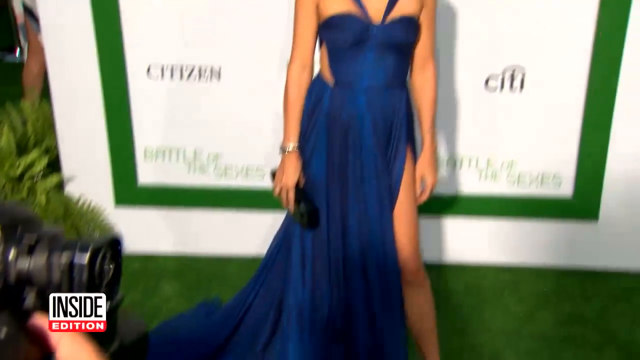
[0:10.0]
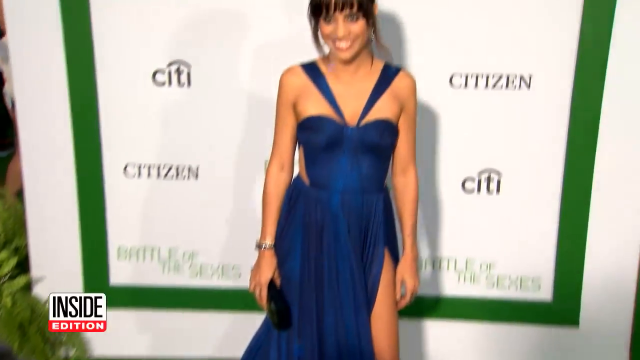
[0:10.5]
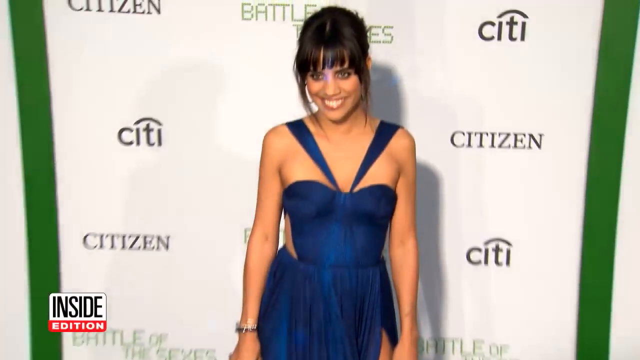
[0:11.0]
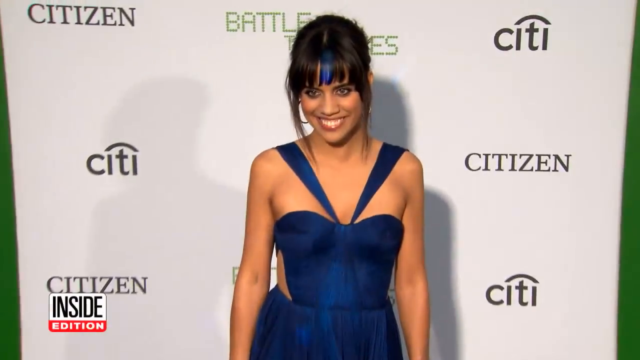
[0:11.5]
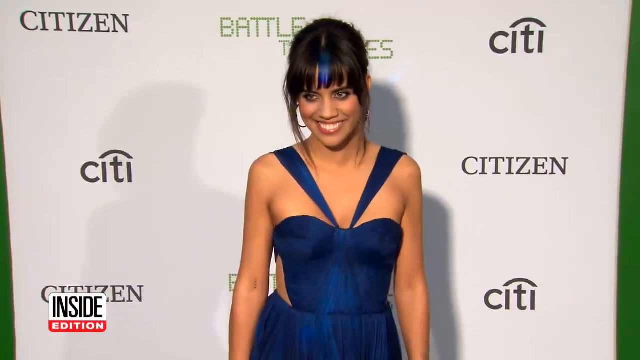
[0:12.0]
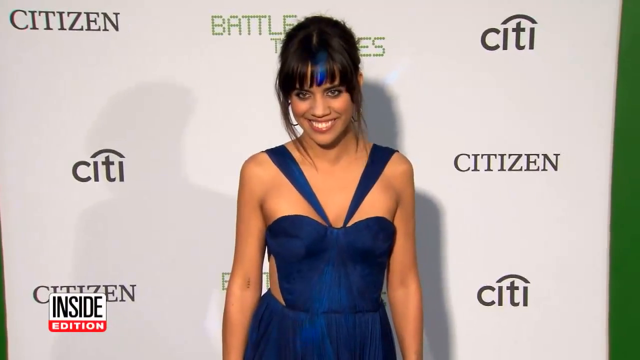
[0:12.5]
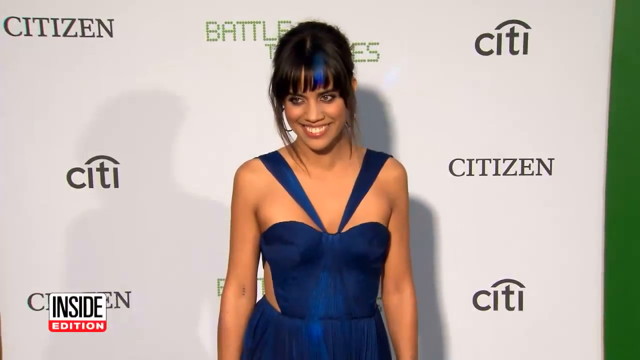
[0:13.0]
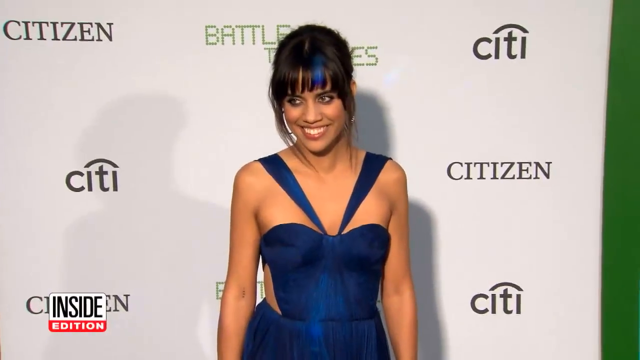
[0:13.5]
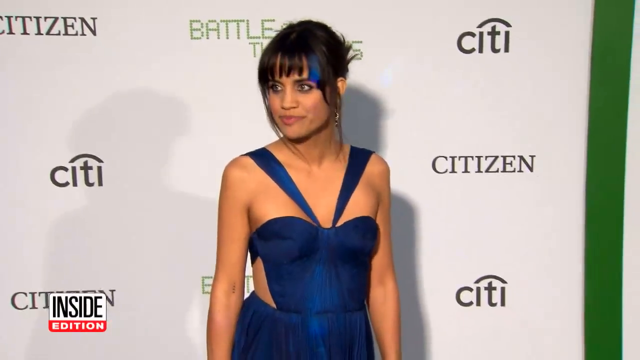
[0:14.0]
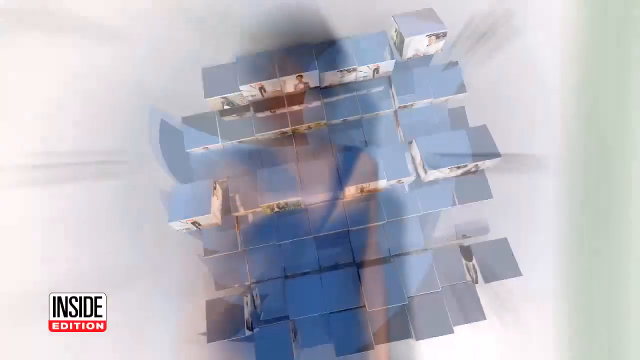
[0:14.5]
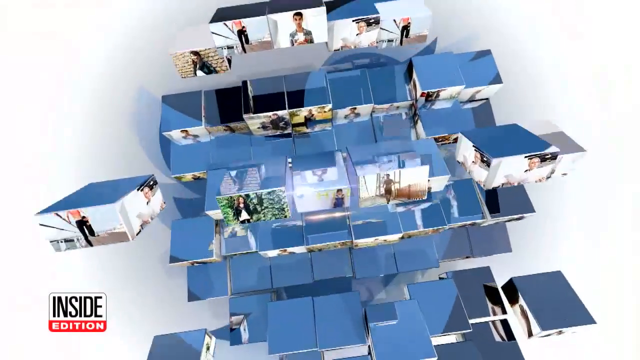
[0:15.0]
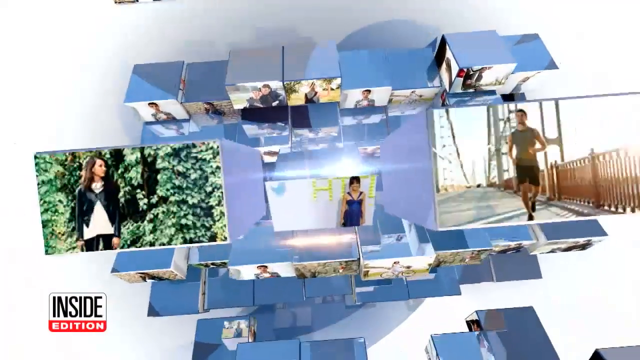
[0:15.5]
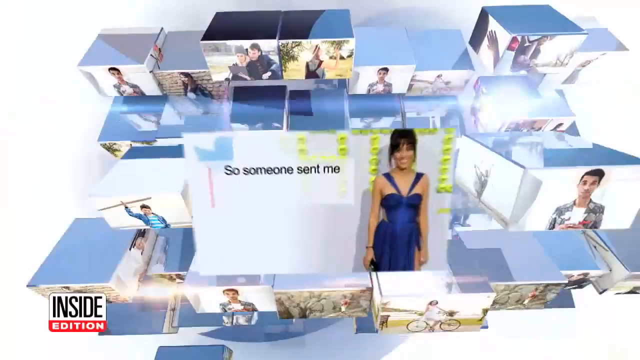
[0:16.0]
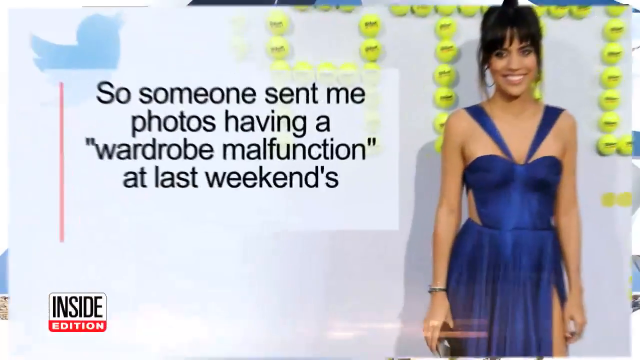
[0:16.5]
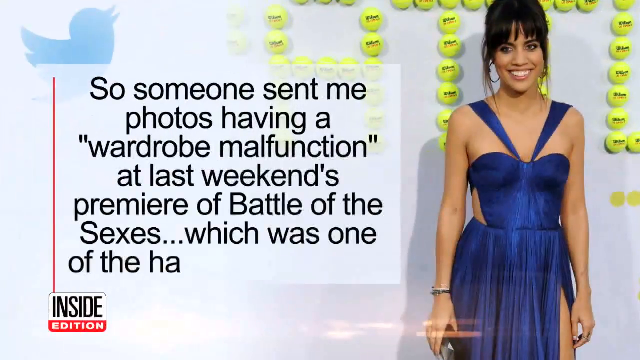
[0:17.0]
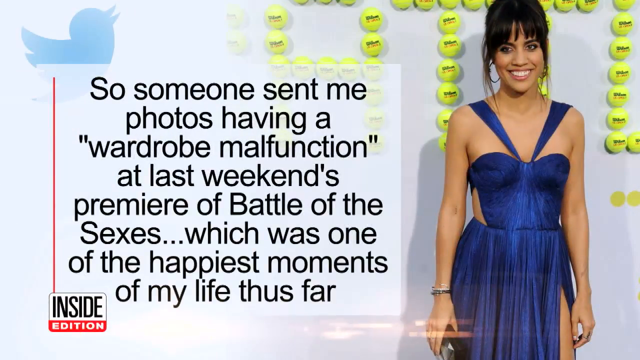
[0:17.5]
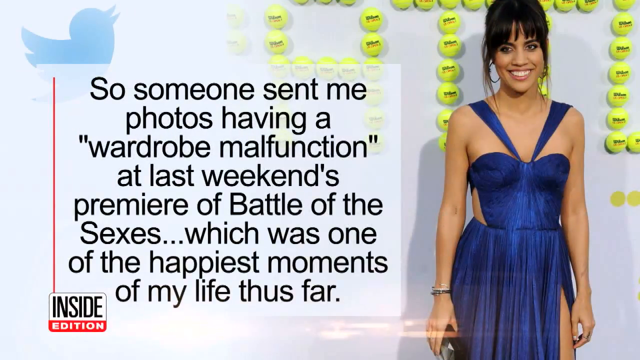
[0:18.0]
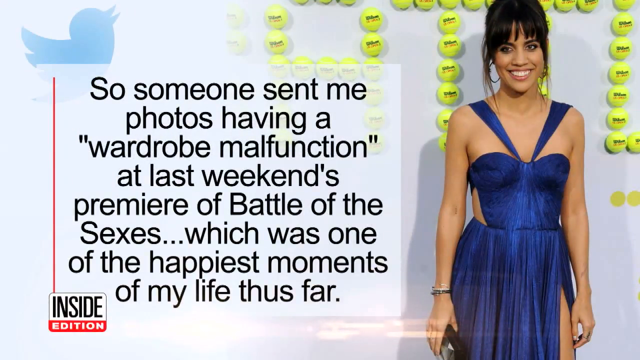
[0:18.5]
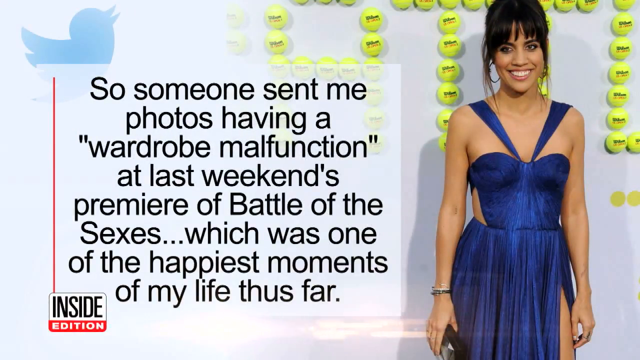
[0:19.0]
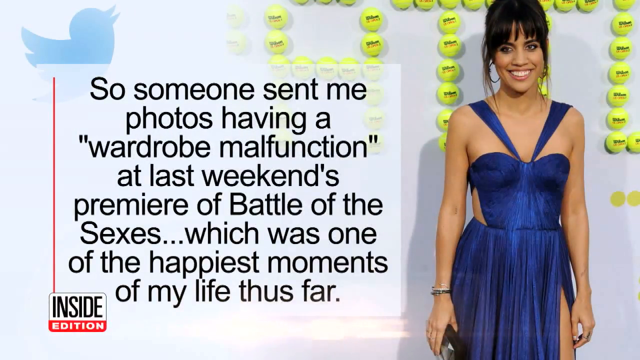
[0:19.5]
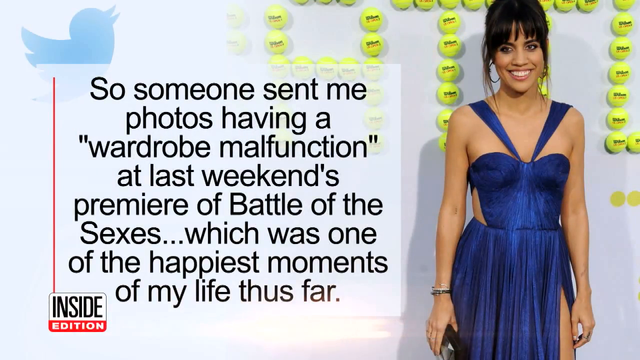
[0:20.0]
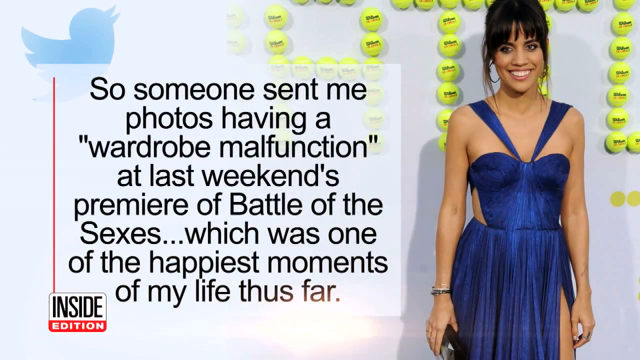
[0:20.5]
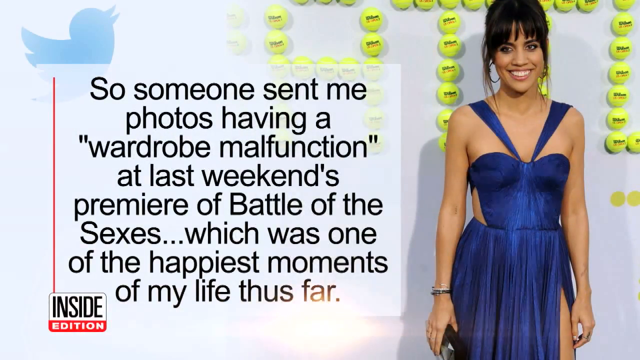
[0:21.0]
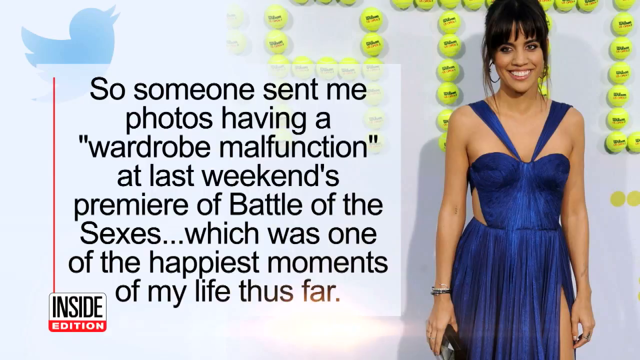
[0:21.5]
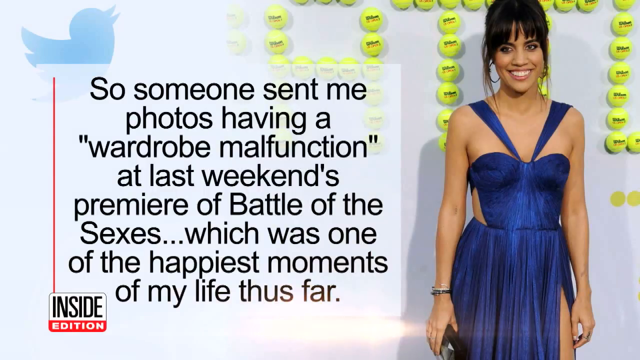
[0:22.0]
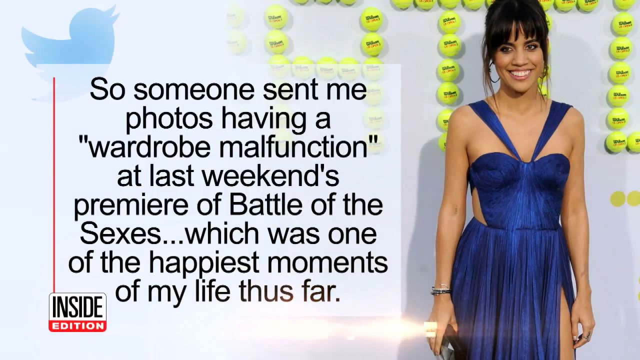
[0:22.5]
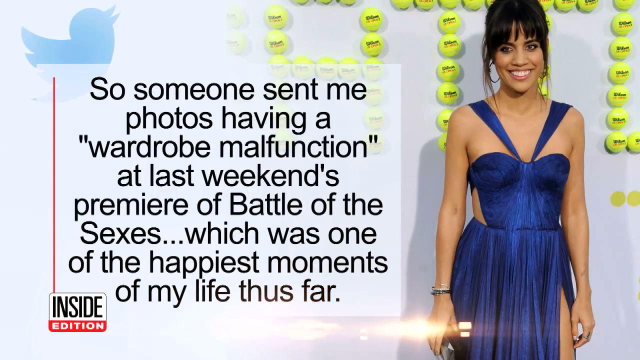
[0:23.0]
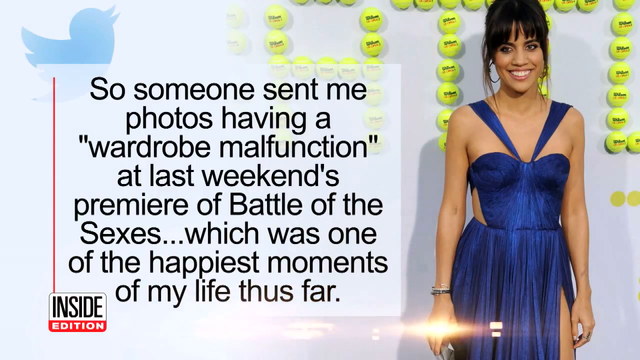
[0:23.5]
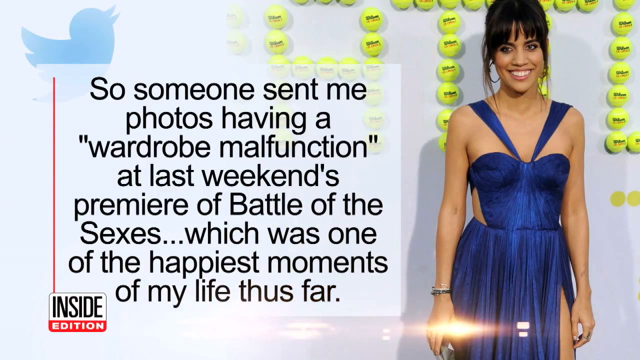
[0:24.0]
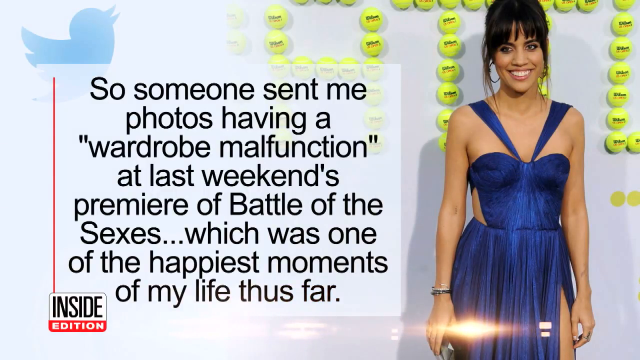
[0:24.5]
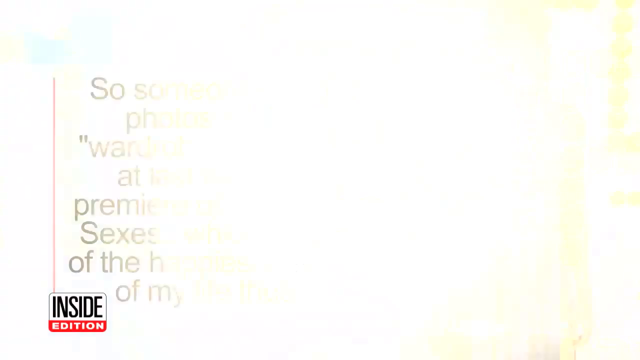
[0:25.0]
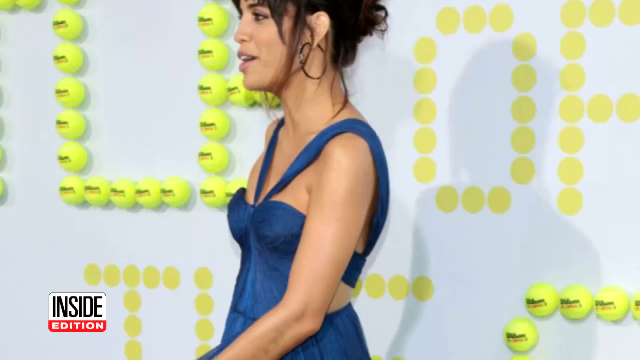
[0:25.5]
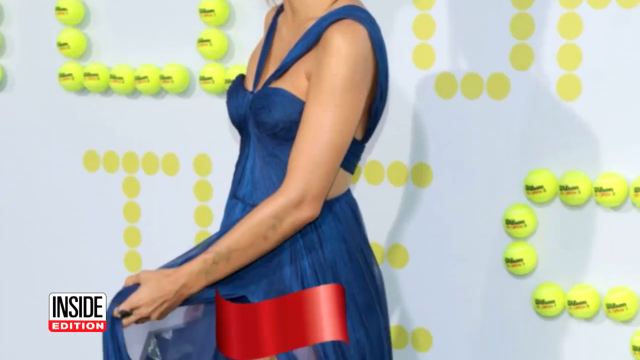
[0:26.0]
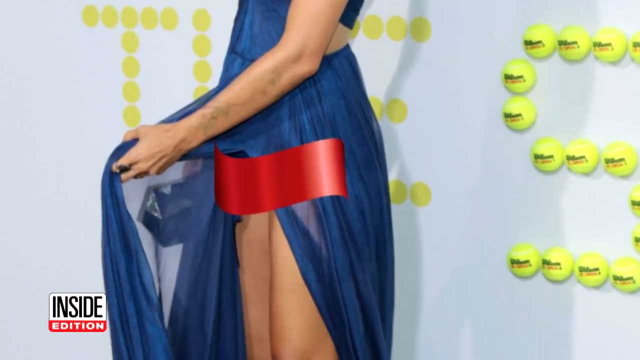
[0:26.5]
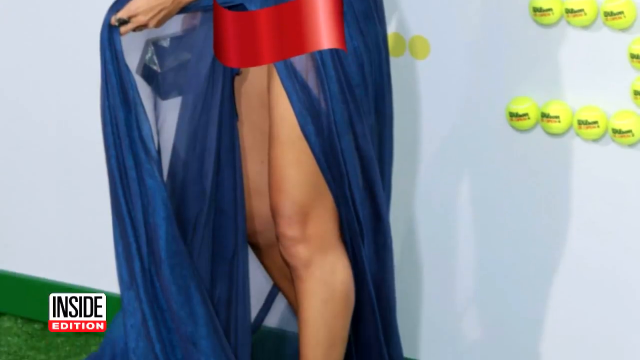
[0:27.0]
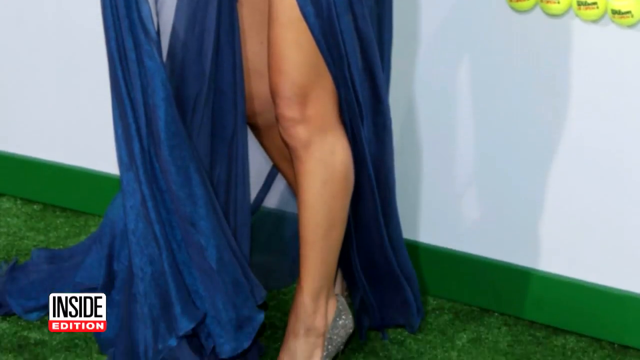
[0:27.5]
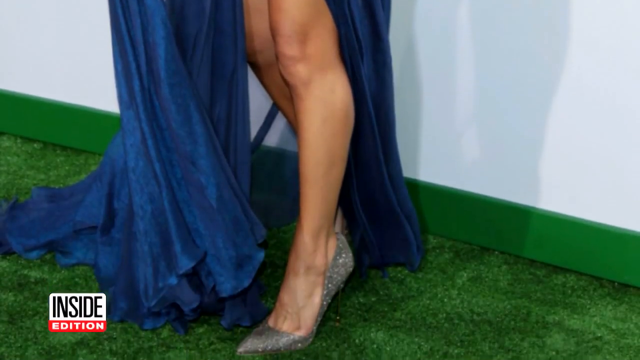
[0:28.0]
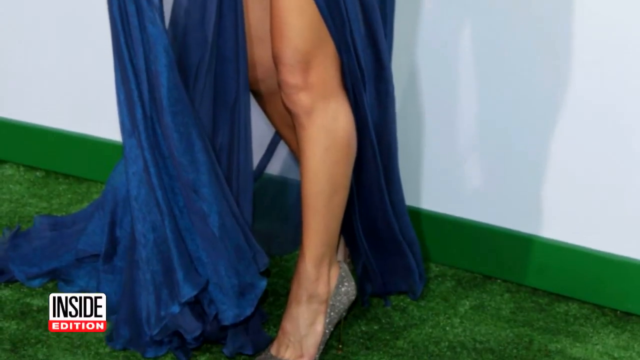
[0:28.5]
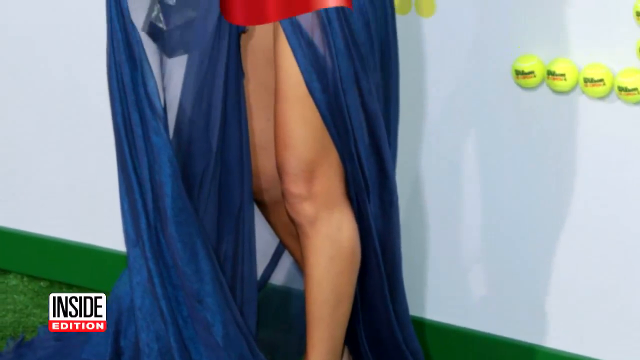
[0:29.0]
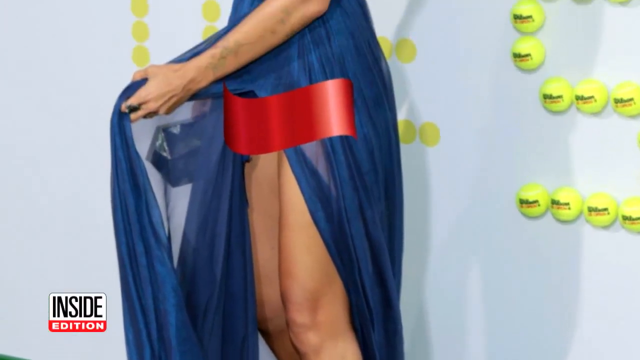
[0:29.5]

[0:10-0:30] A woman is being photographed by a photographer. She wears a long blue dress and carries a purse, smiling, with big bold eyes. The banner behind her says "Citizens." Another woman also appears: tall, with all blonde hair, wearing black trousers and shoes and holding a bag. The photographer keeps taking pictures. The text "Battle of the Sexes" is visible. As she smiles for the camera, a statement appears that begins "So someone sent me photos having a wardrobe malfunction" and goes on to mention the weekend's premiere of "Battle of the Sexes," calling it "one of the happiest moments of my life thus far." The camera zooms in further on the woman in the bright blue dress, then on her shoes, which appear to be high heels with shining diamonds. She has a bright smile and shiny earrings.